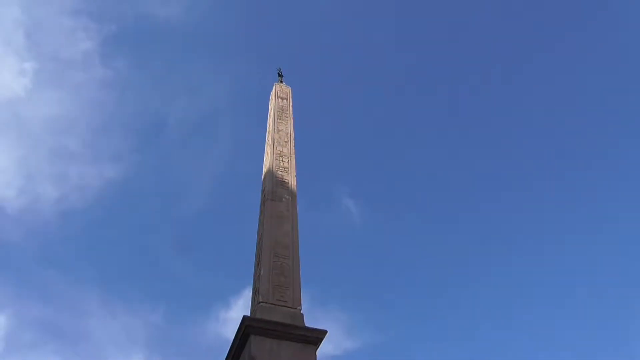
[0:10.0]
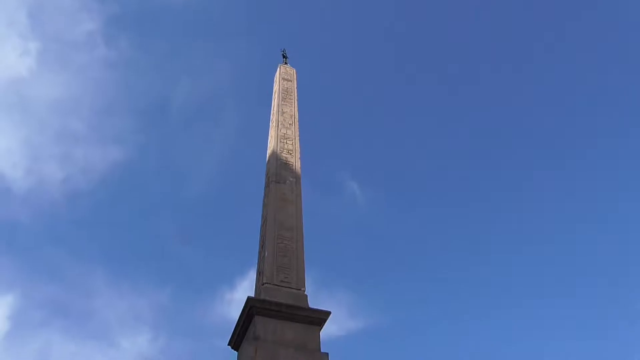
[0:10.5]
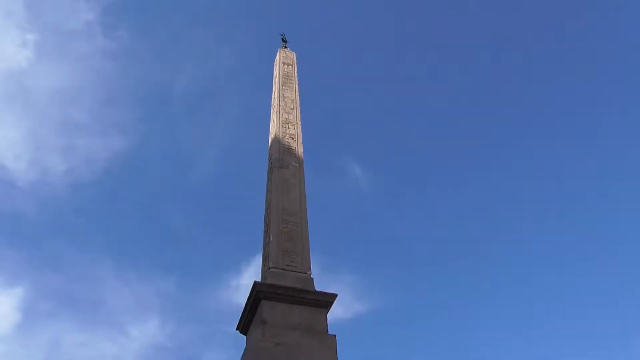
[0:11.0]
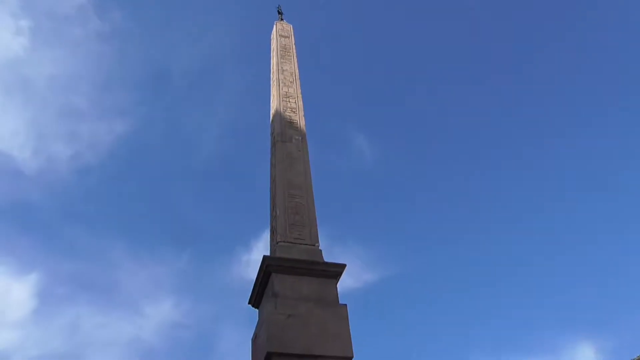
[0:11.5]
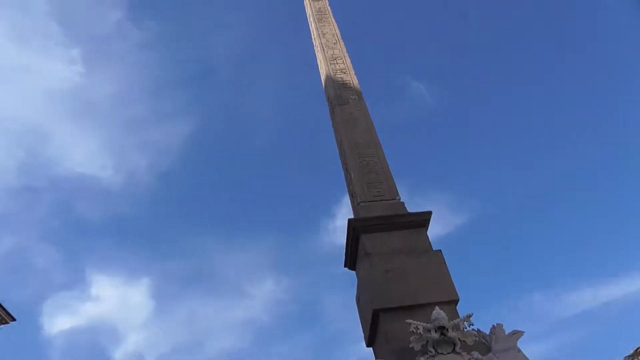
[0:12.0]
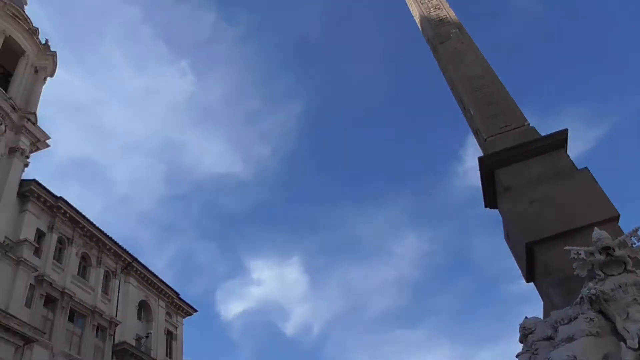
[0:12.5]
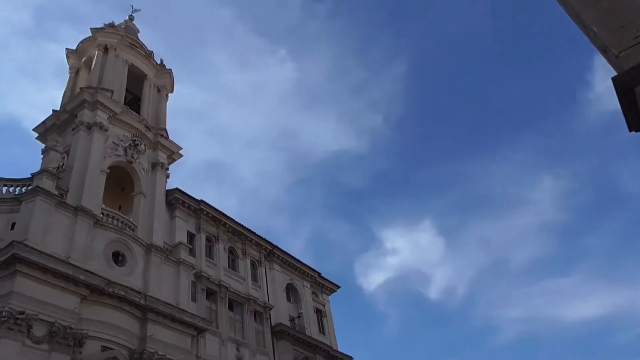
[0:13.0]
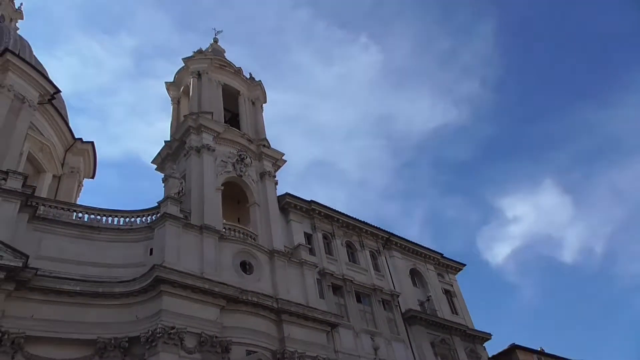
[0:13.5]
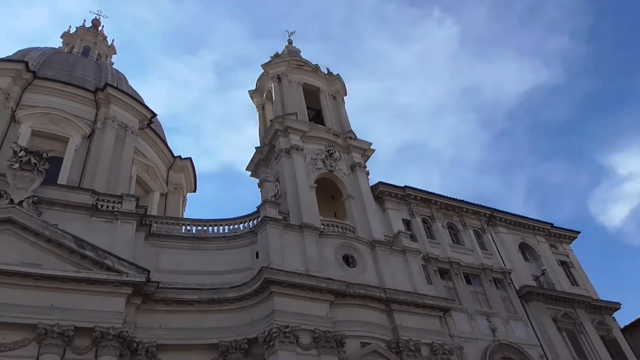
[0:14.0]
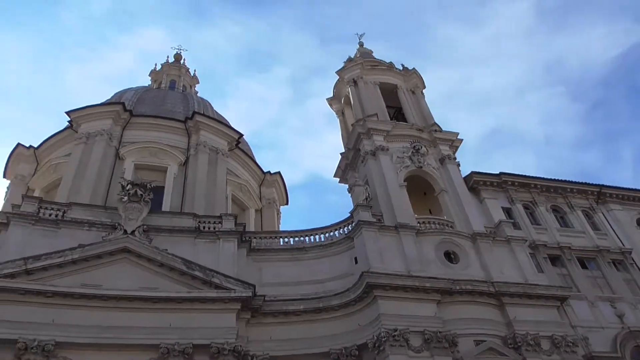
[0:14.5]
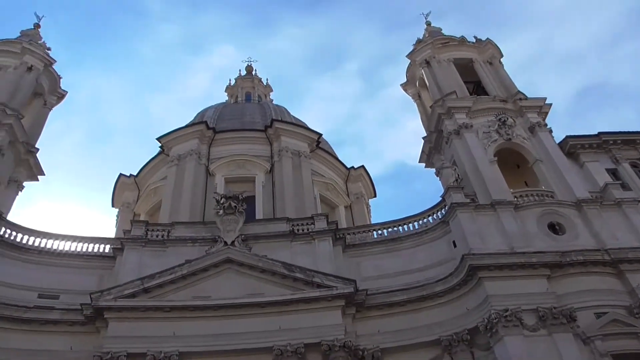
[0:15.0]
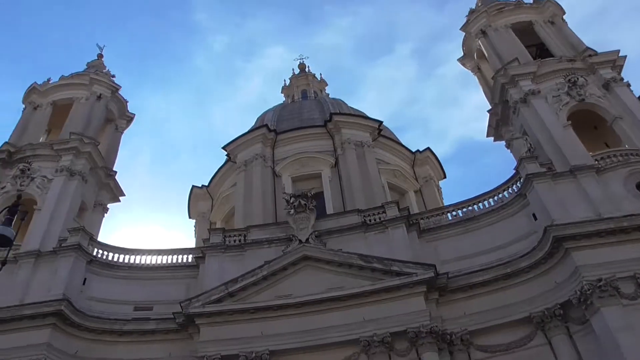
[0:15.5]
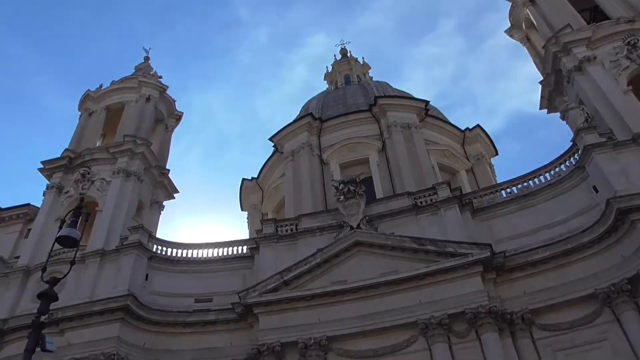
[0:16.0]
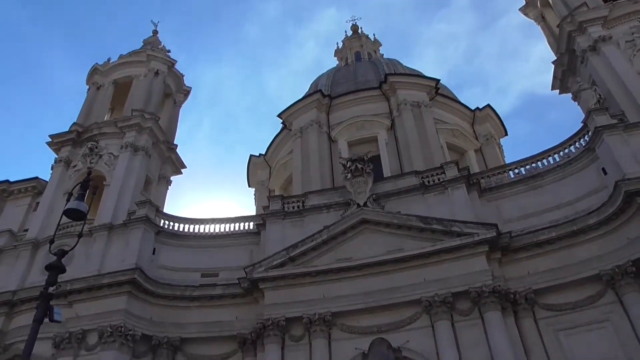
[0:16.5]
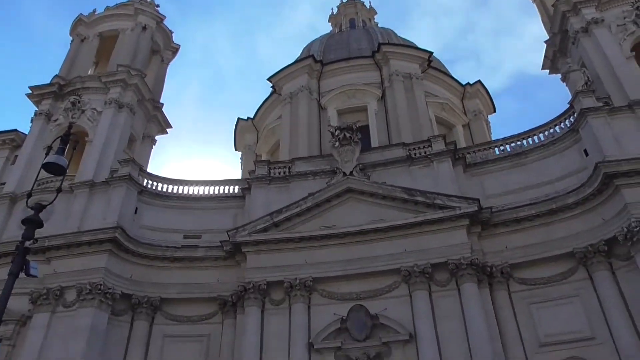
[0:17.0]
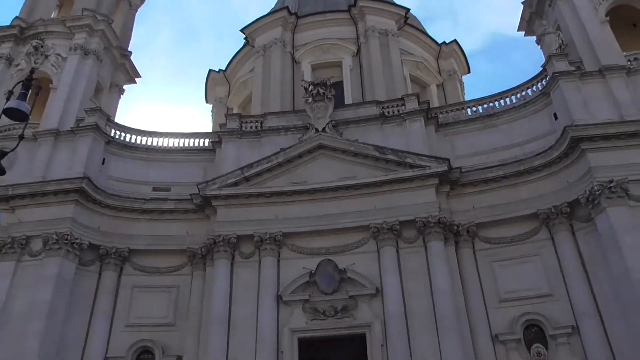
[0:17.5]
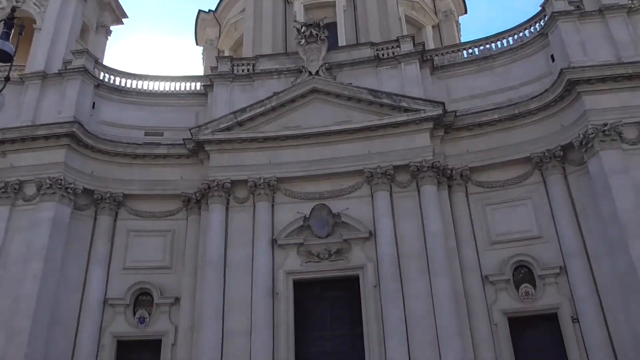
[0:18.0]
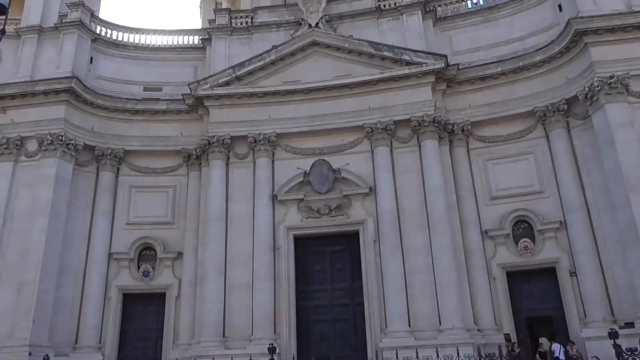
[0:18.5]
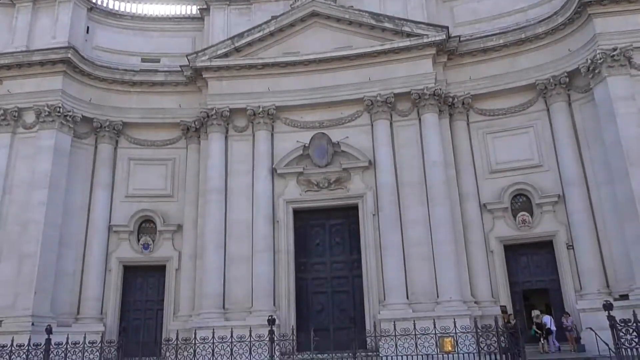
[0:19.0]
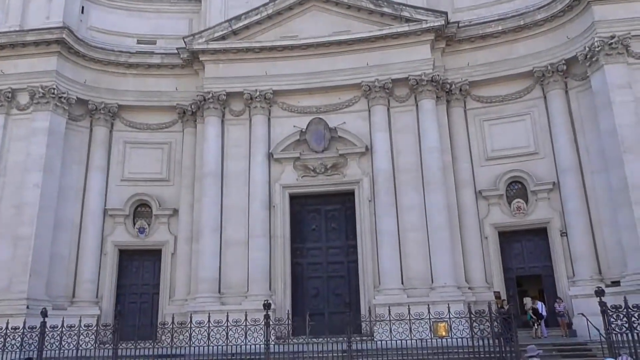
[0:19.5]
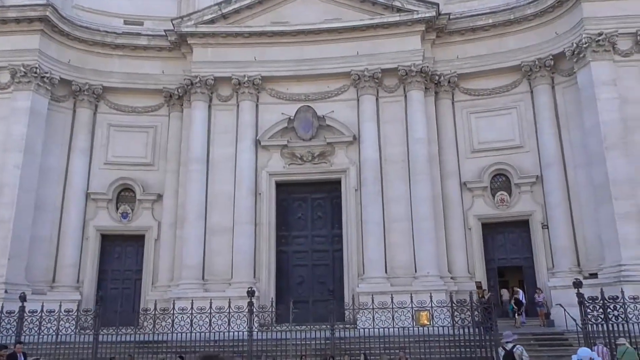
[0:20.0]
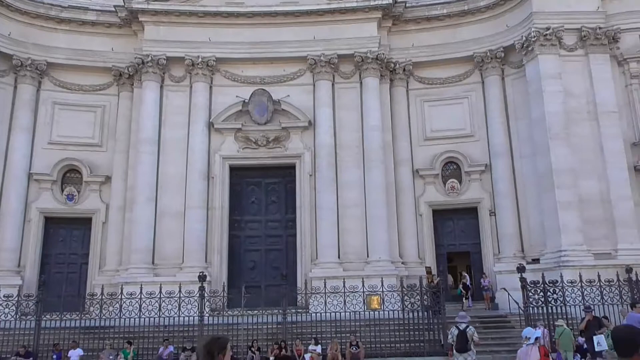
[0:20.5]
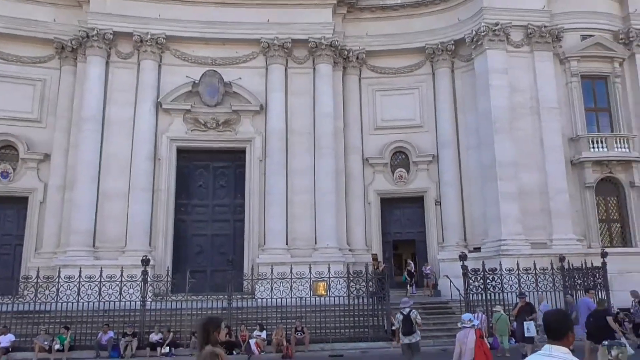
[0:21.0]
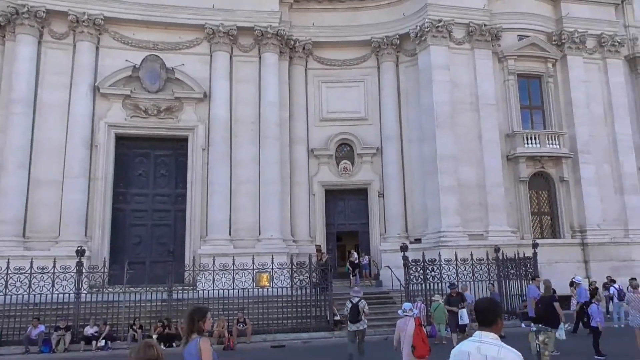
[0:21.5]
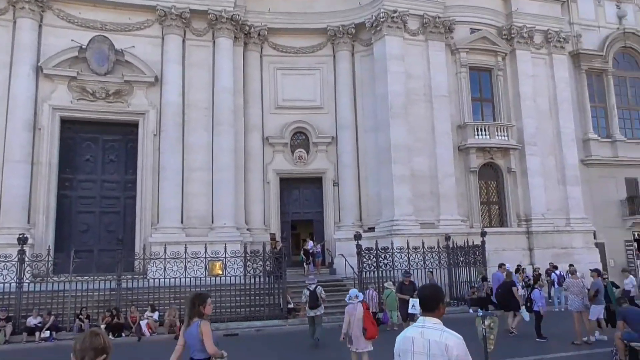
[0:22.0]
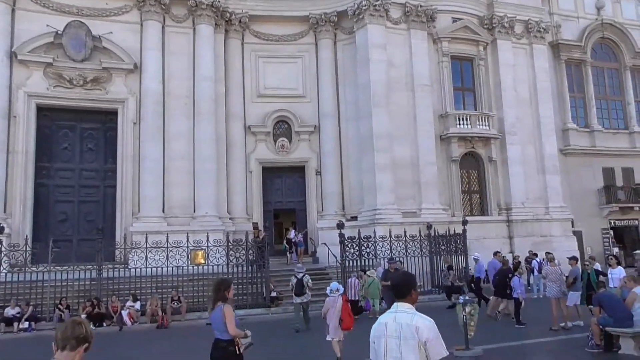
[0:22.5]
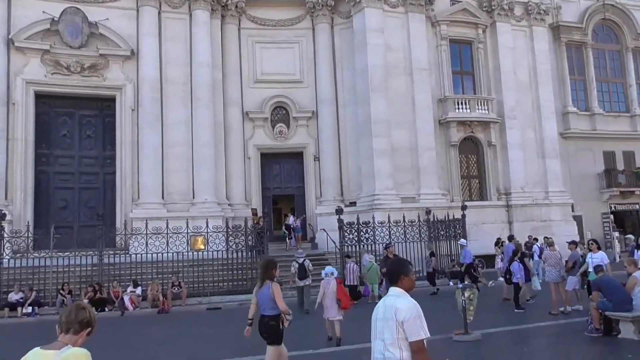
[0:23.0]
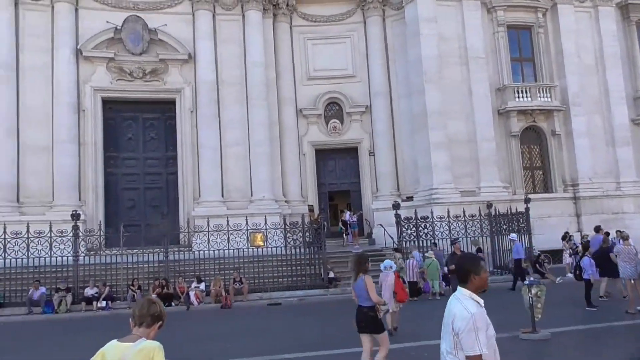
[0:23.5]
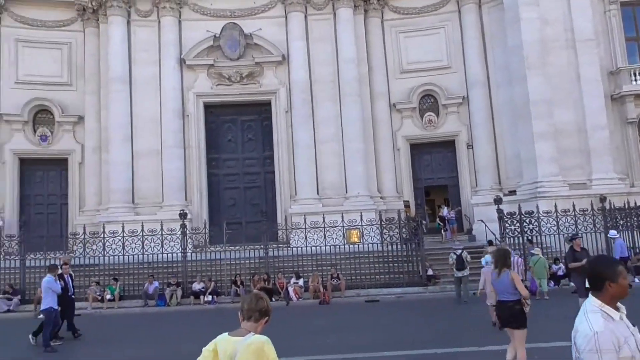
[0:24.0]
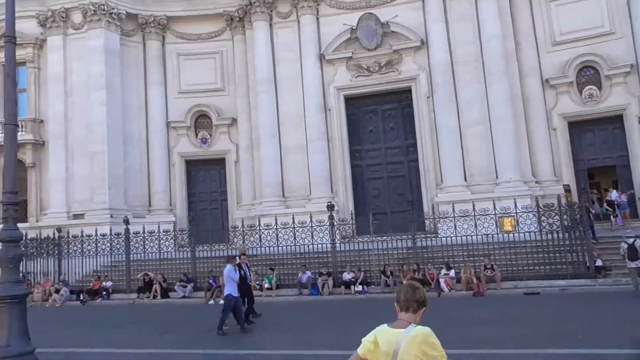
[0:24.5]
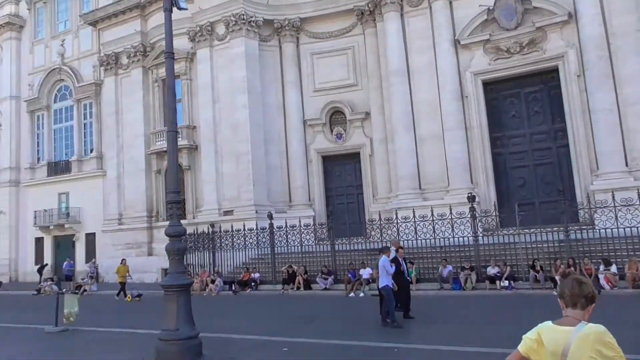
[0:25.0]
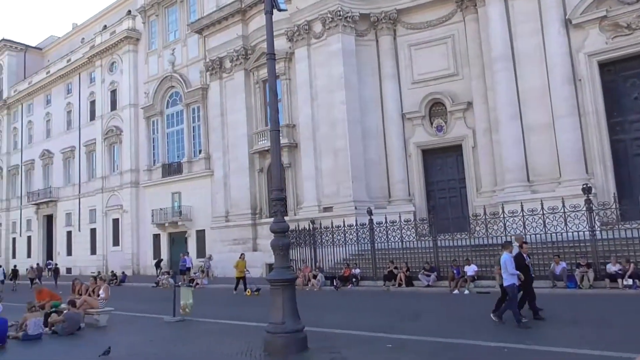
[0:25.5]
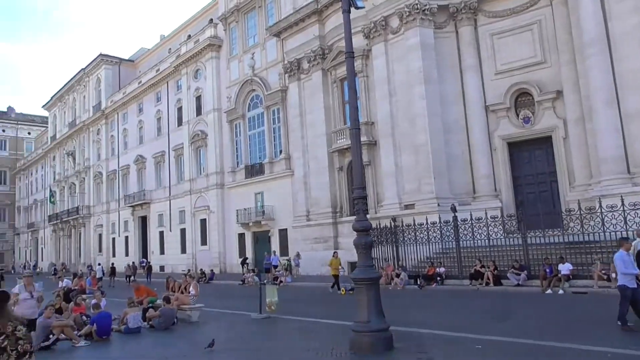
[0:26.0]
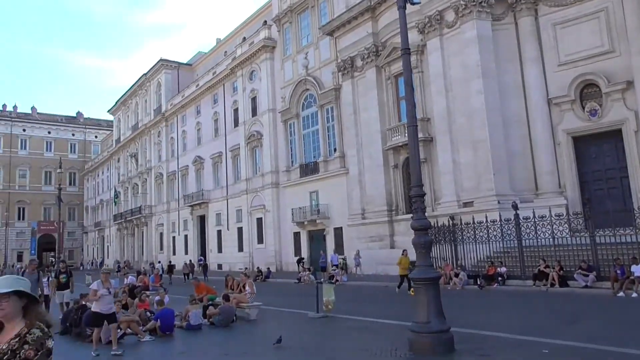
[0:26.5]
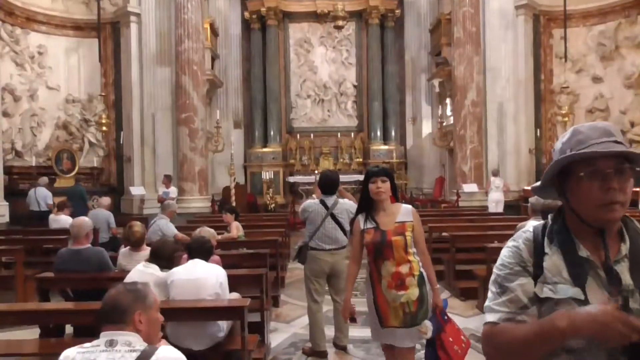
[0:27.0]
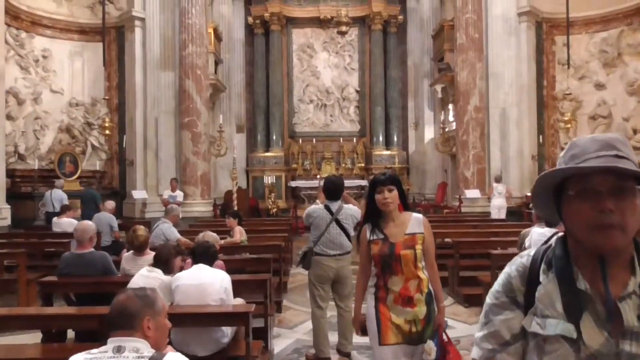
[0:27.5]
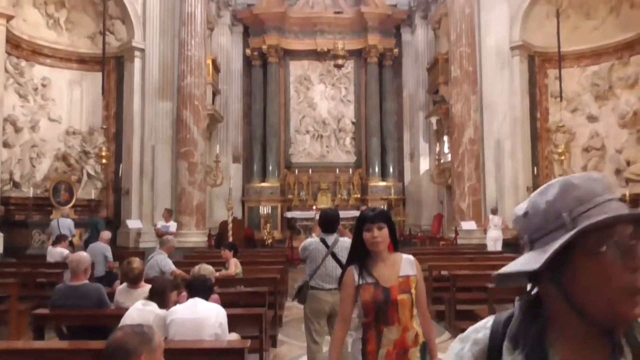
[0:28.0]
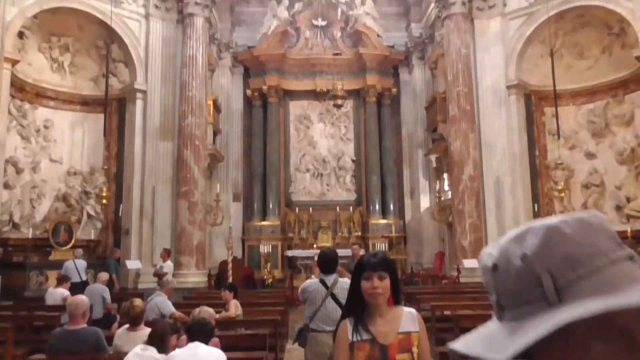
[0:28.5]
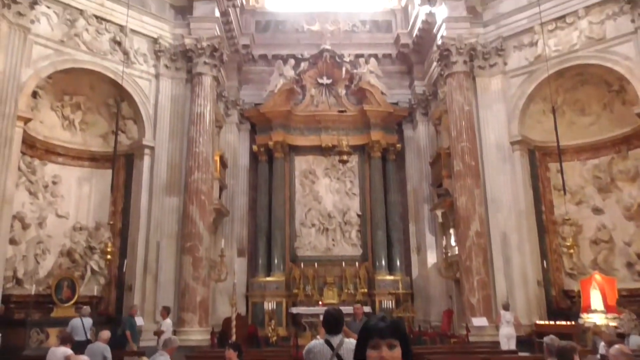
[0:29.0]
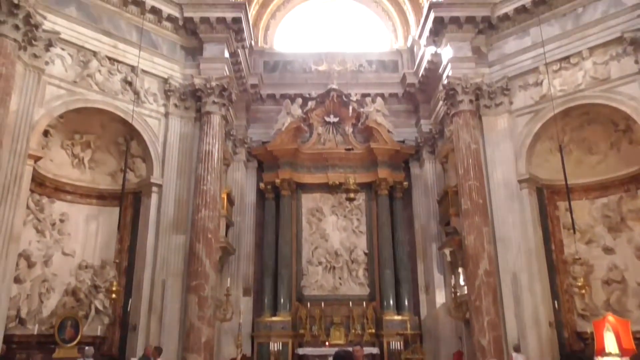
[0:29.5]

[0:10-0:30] The shot opens on the stone structure in the fountain, with a blue sky above. The camera quickly pans to a stone structure that looks both Gothic and European, with floral and draping designs carved into it and a dome on top. The building is regal-looking and highly detailed, with large oversized doors, small railings up top and scroll work. The camera pans down to a black, Gothic-looking fence in front of the structure. On the right side, some tourists go into the structure, and the camera pans over to a busier tourist area where people loiter, come and go, and wear clothing in various colors; some wear hats and some carry backpacks, and they appear to be wandering around. The footage is a little blurry. The camera continues to pan around, taking in more of the very large structure, which has something of a small city square look. Then the inside of one of the buildings is shown, with ornate scroll work and statues that look somewhat Renaissance-style. The camera pans upward to gold-decorated windows.